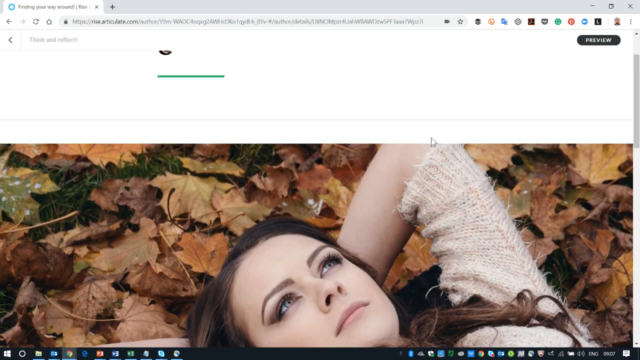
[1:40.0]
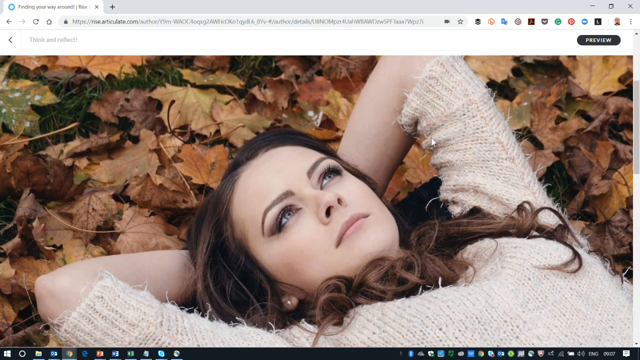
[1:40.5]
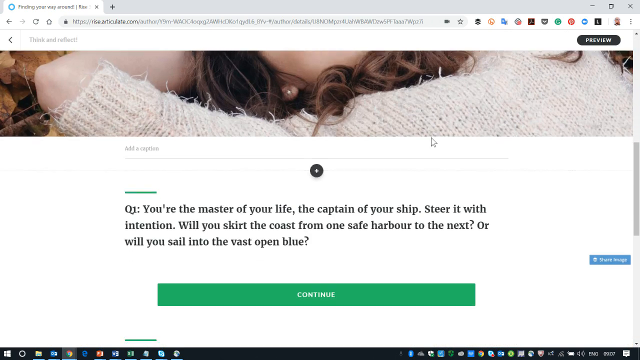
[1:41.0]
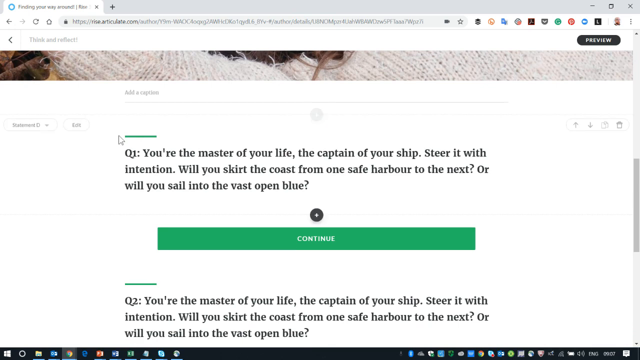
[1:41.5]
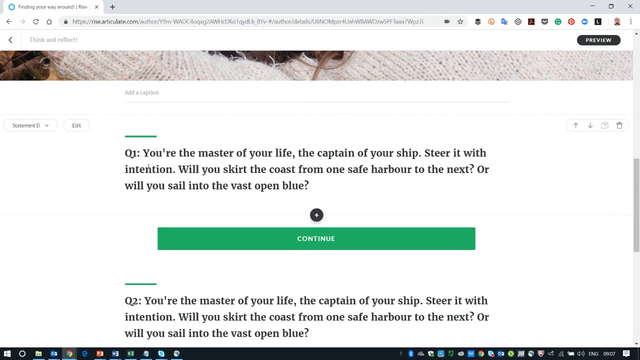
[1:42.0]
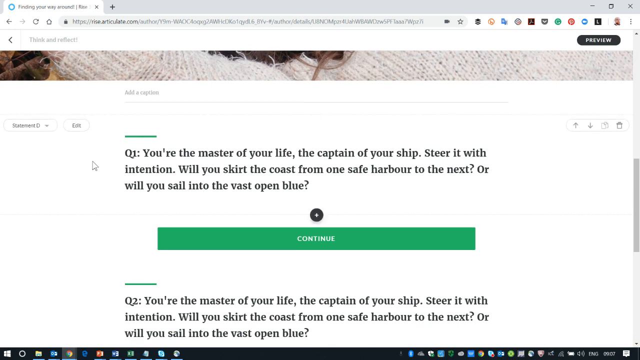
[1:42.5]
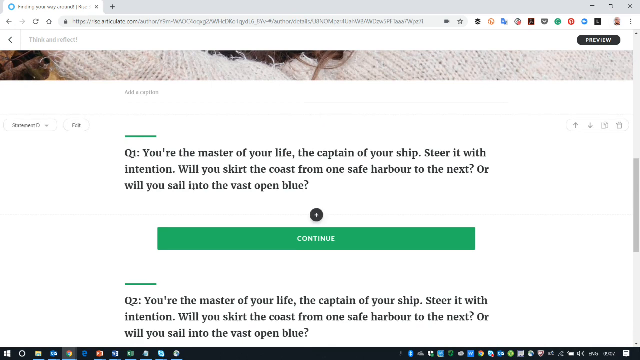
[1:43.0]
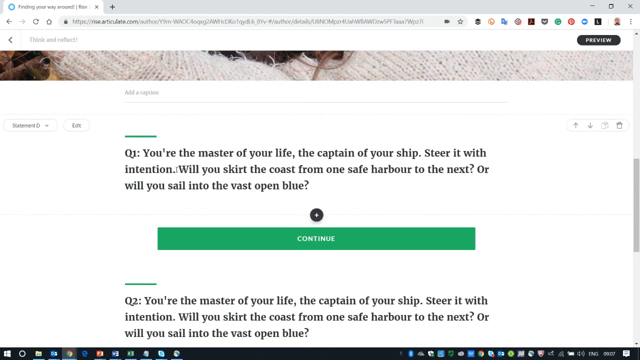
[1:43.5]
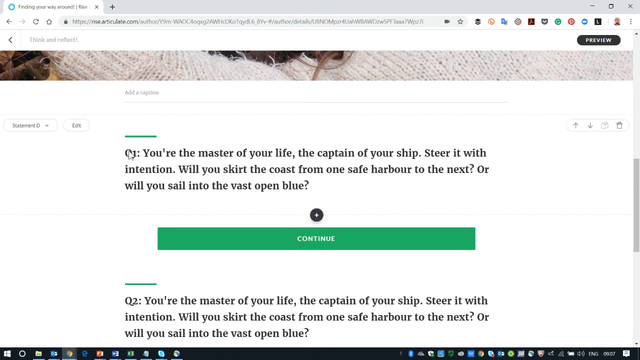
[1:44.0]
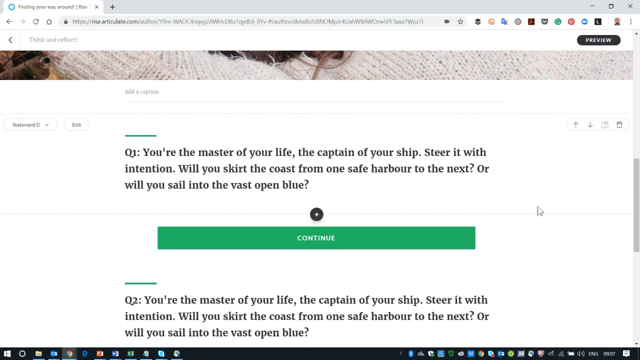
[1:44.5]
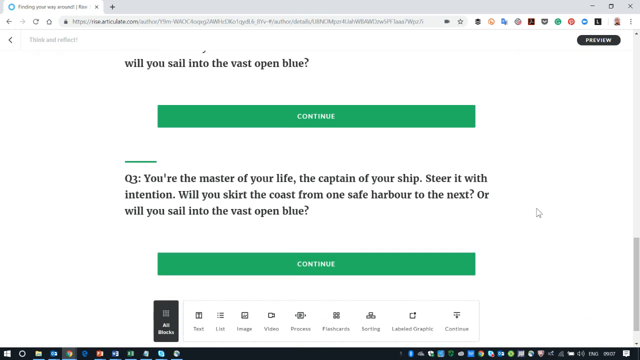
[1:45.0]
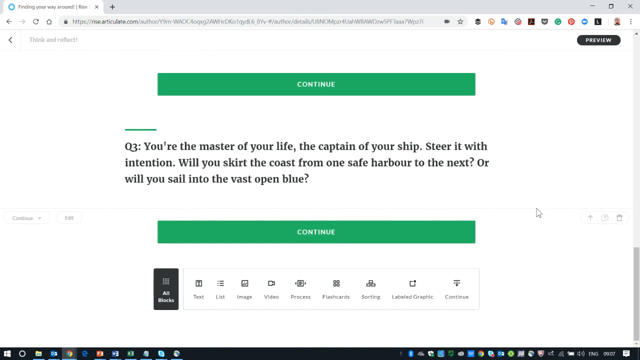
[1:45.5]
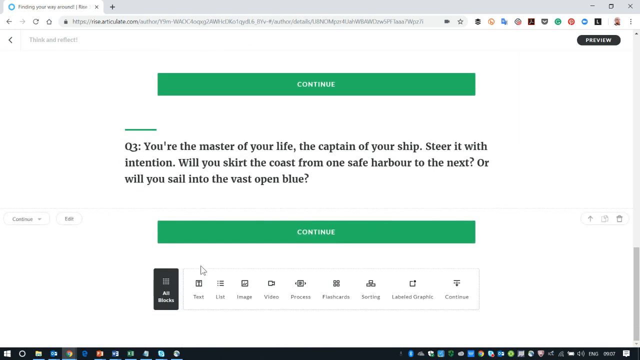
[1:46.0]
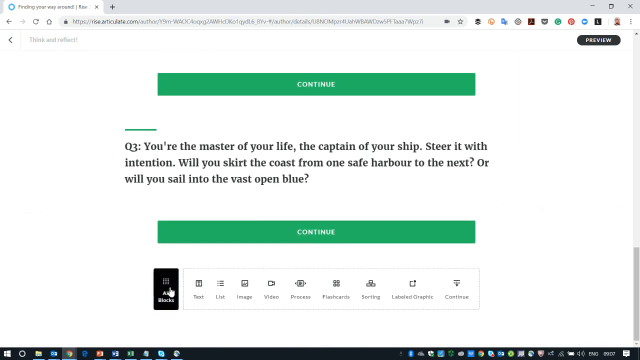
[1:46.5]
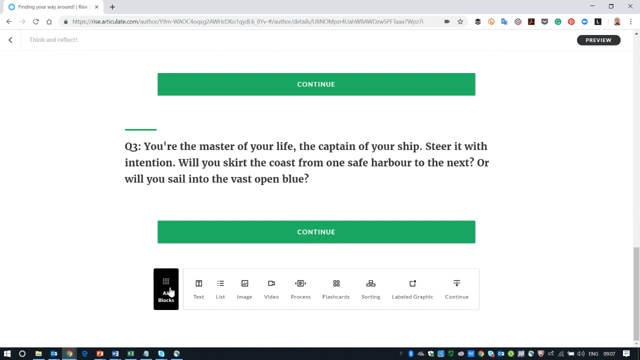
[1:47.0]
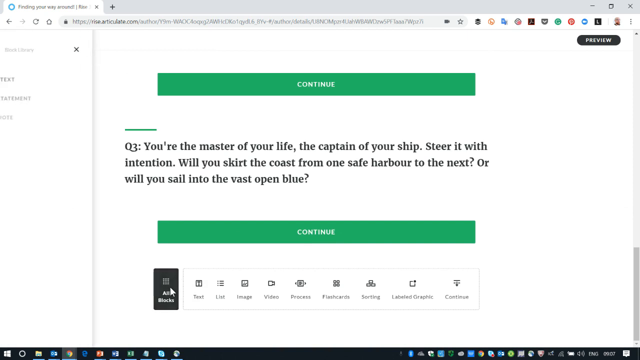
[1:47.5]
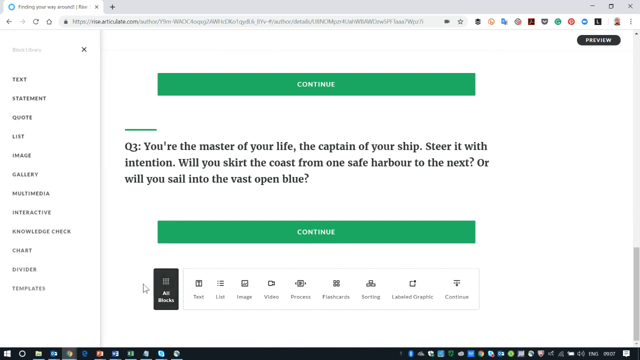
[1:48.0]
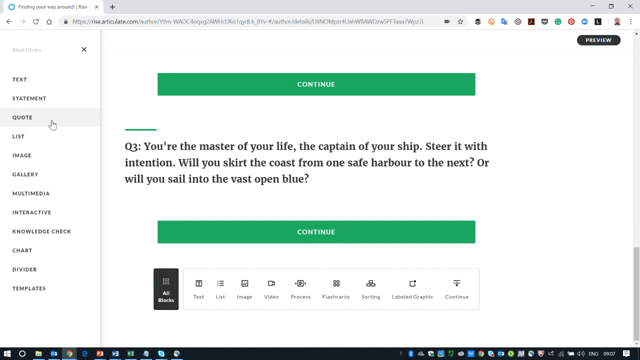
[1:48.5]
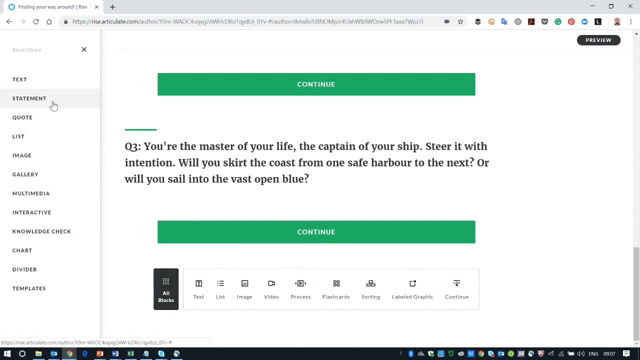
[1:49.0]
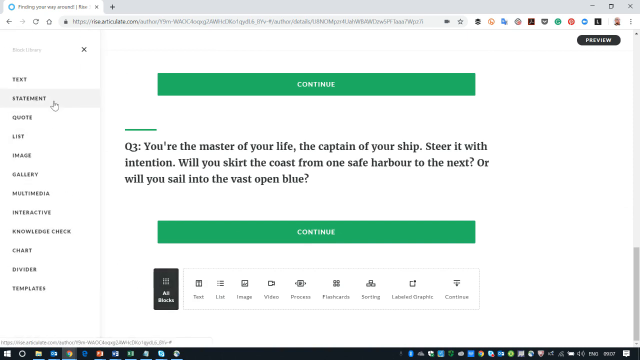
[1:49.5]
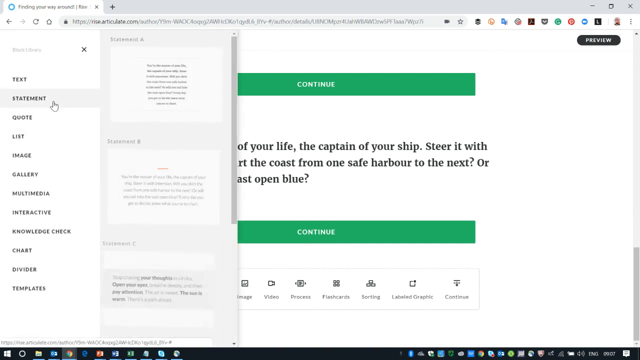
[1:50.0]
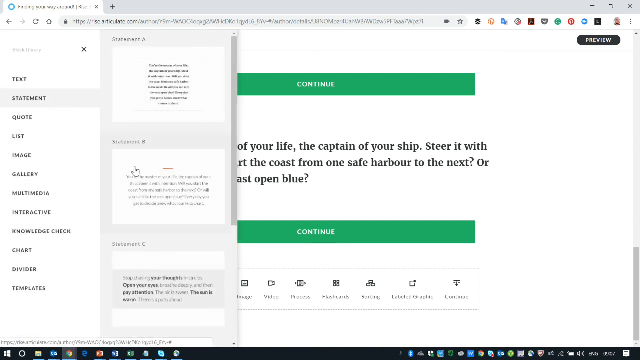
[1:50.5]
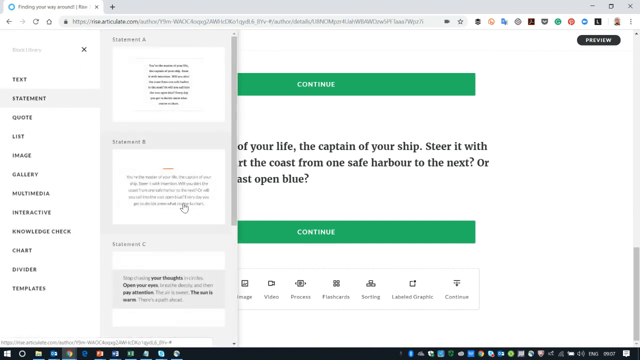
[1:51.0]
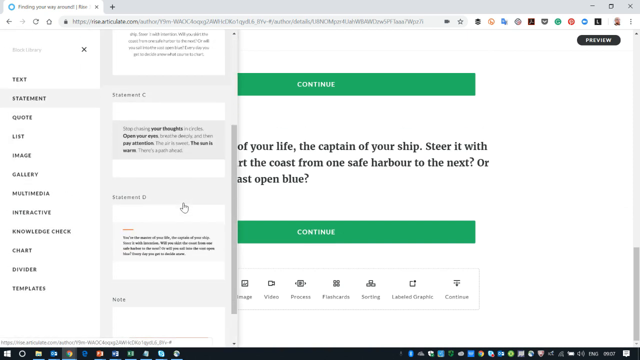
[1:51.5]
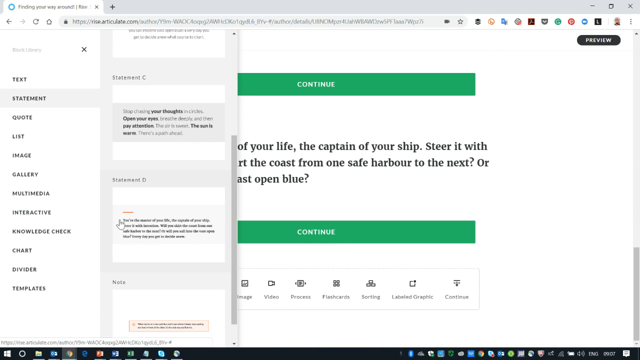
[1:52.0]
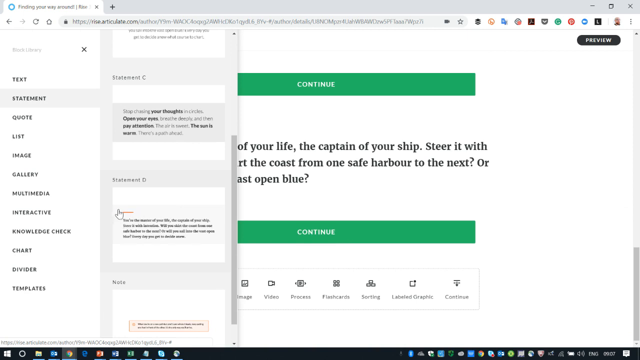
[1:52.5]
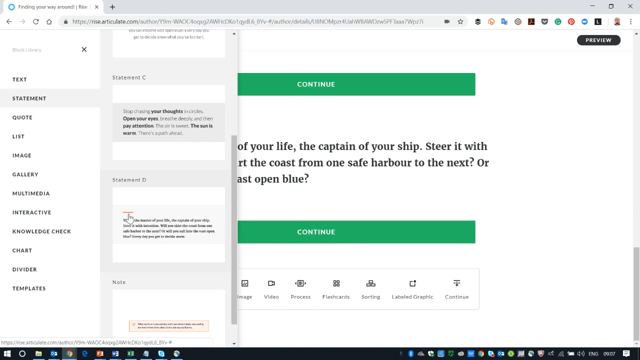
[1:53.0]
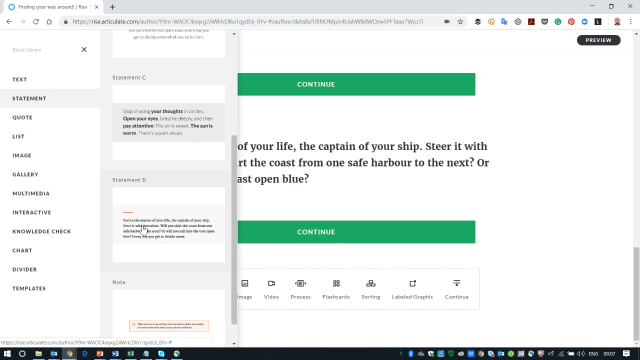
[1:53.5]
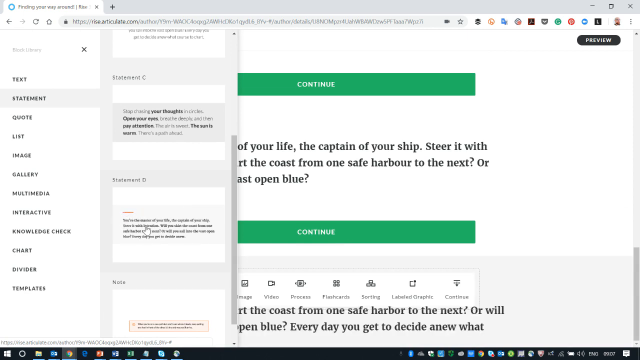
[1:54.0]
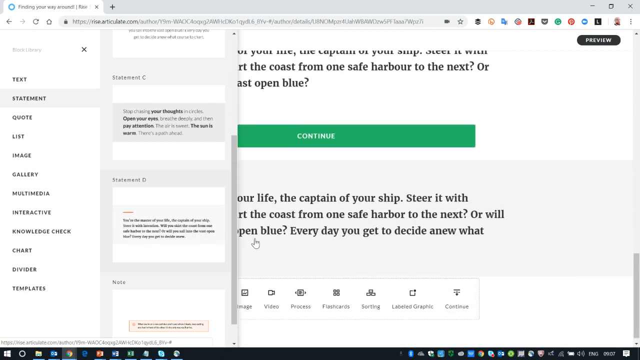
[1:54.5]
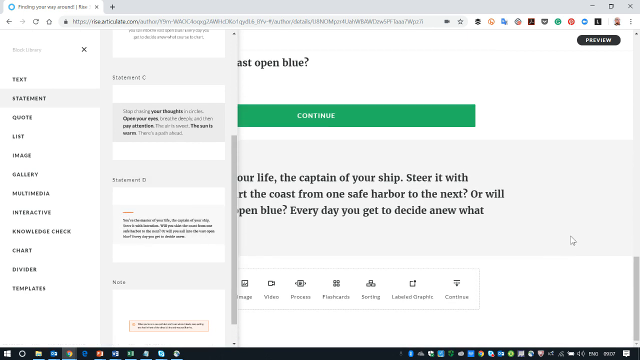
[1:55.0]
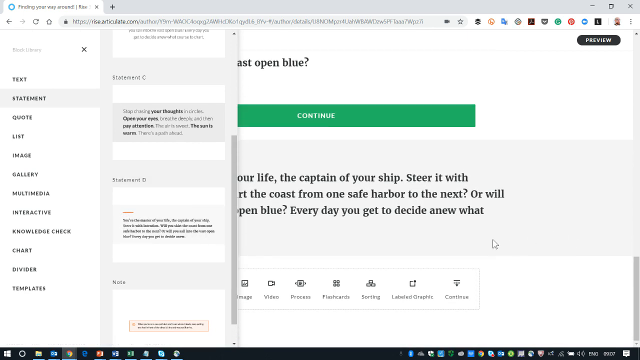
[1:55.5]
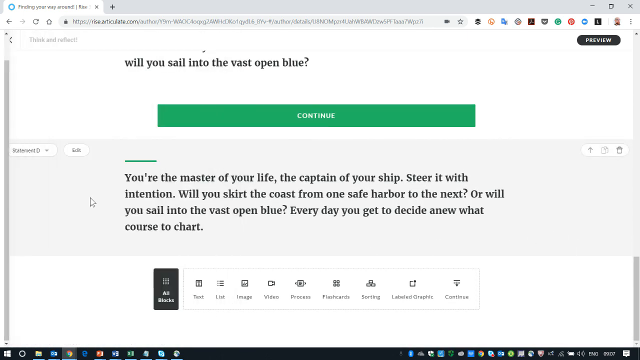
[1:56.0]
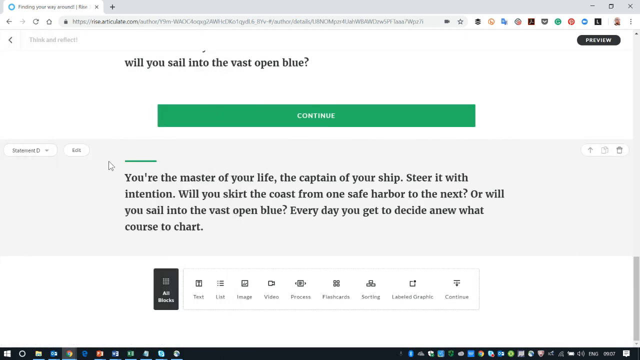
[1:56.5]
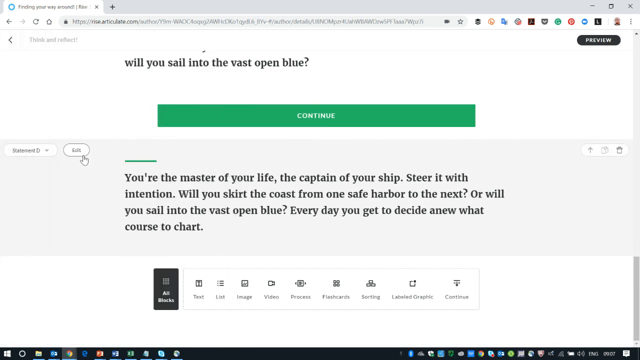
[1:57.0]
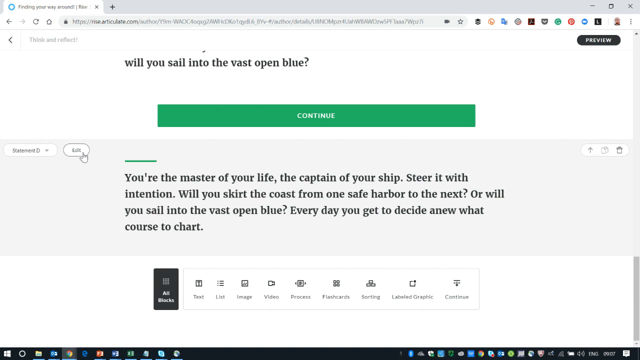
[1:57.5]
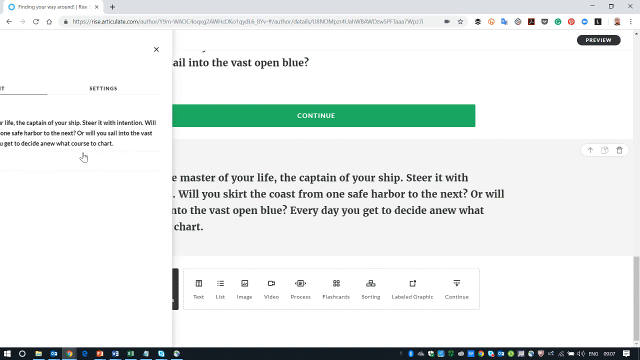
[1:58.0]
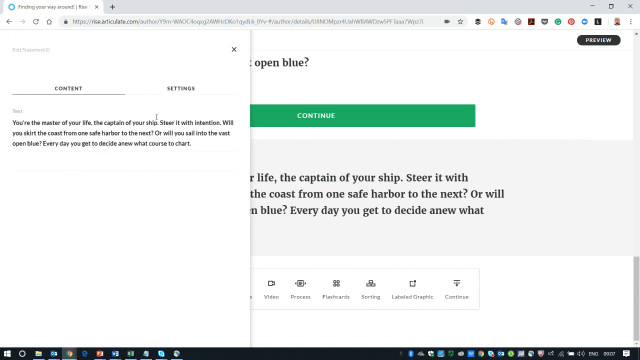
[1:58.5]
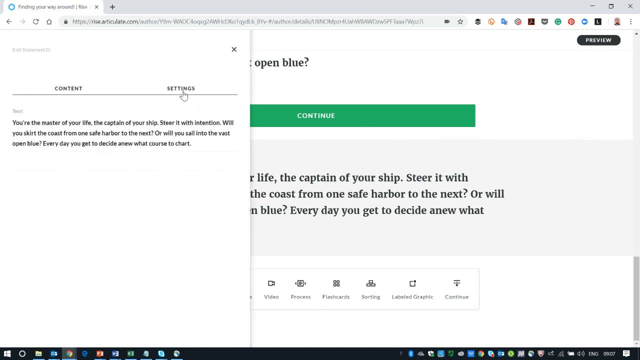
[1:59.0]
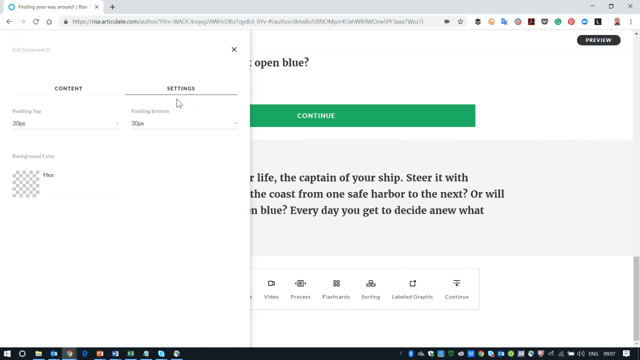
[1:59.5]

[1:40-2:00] Taking one question as an example, he goes to the statement tab and selects statement D, and the option to edit appears; the settings can also be opened. The highlighted question is question three. The edit tab contains options for text, statement, quotes, images, gallery, list, multimedia, interactive and knowledge. Statement is selected, then the statement to change is clicked, and an edit button appears on that question or statement.